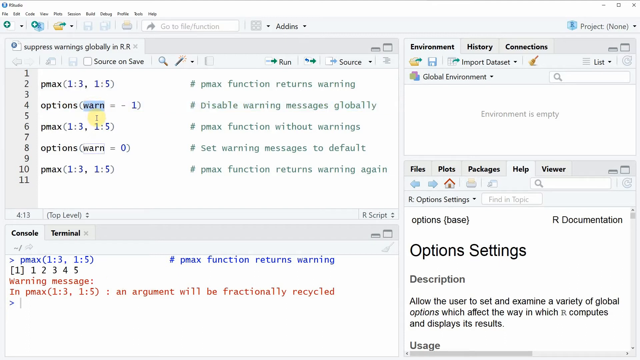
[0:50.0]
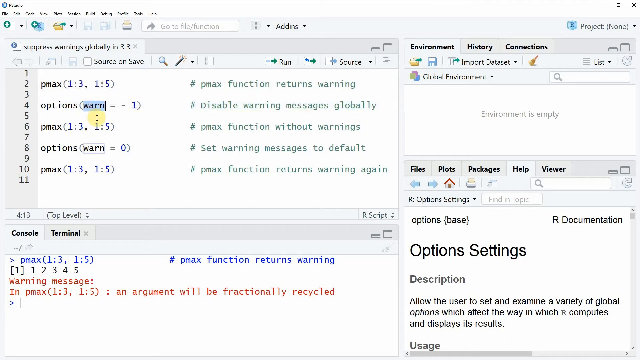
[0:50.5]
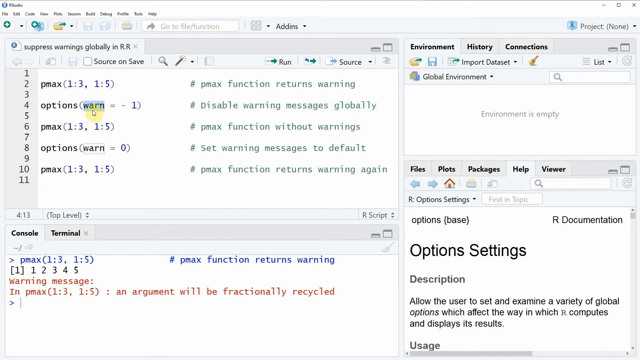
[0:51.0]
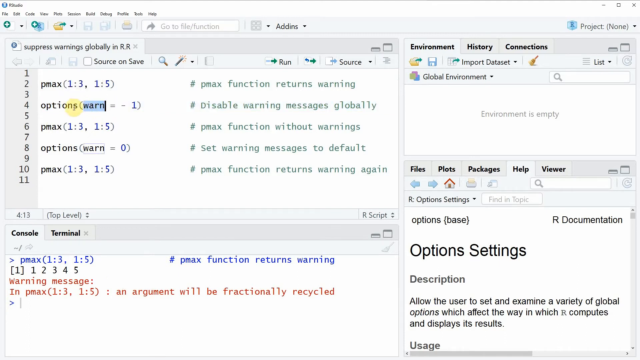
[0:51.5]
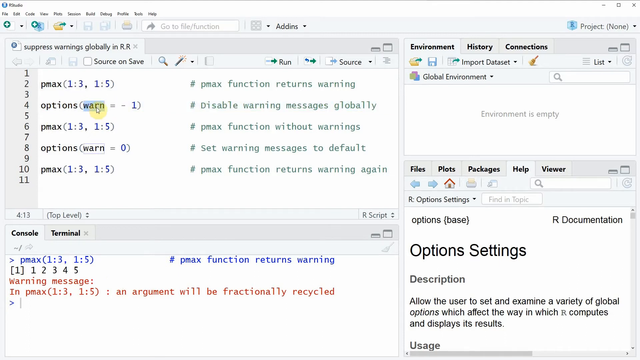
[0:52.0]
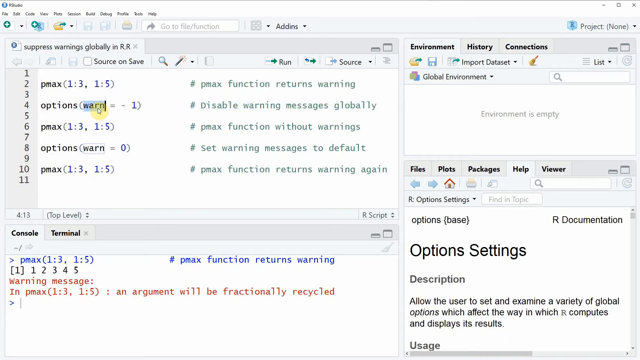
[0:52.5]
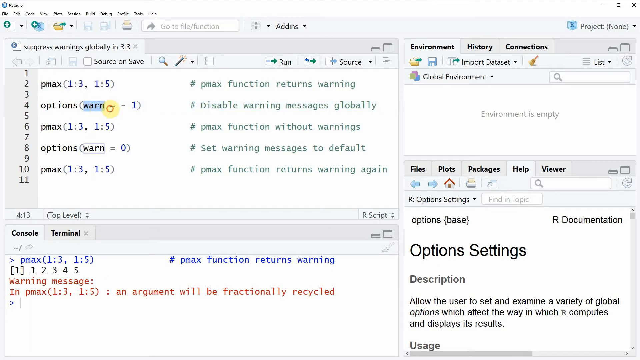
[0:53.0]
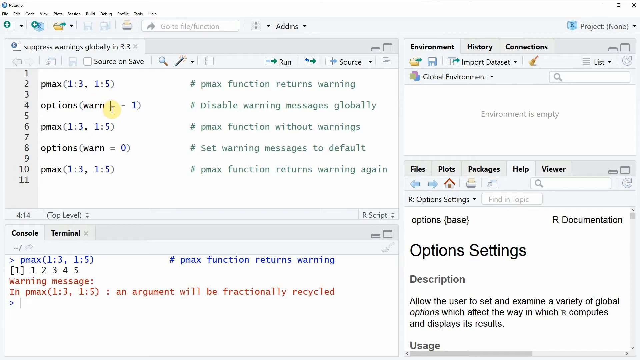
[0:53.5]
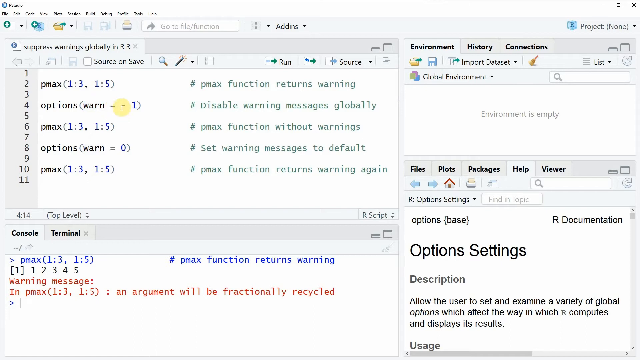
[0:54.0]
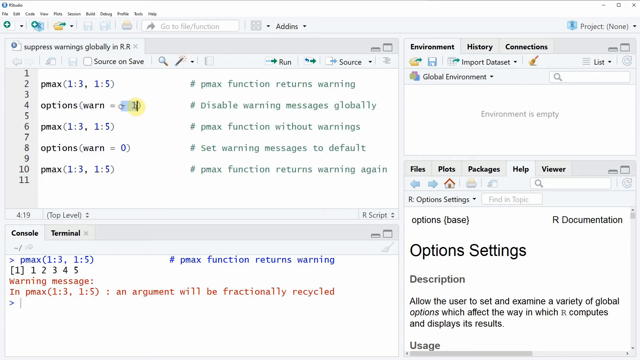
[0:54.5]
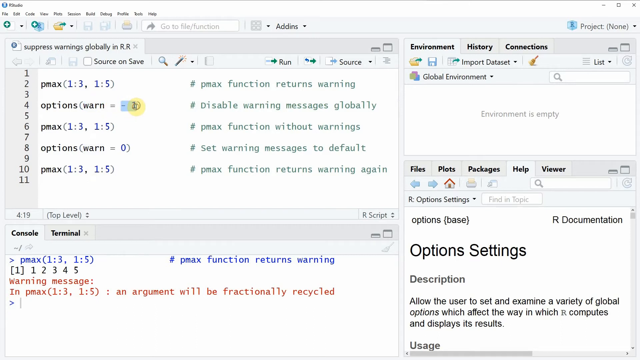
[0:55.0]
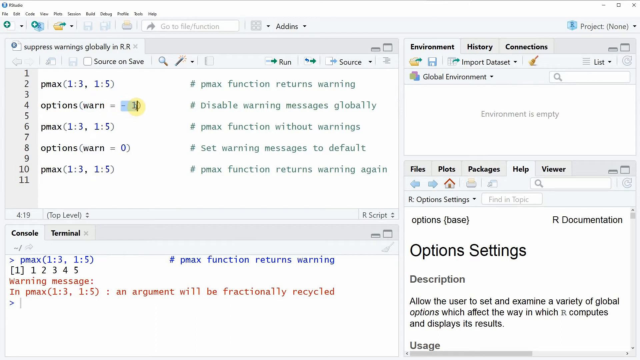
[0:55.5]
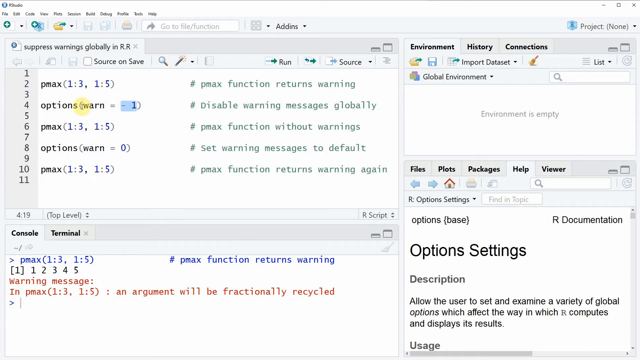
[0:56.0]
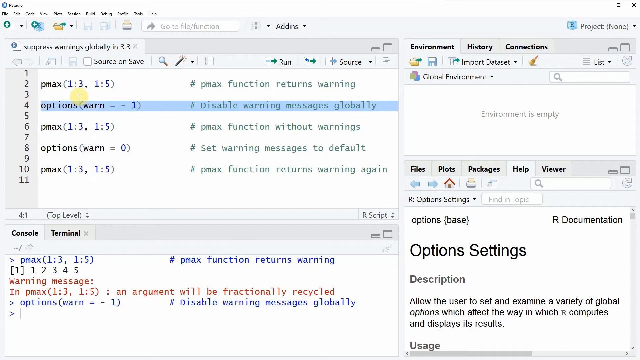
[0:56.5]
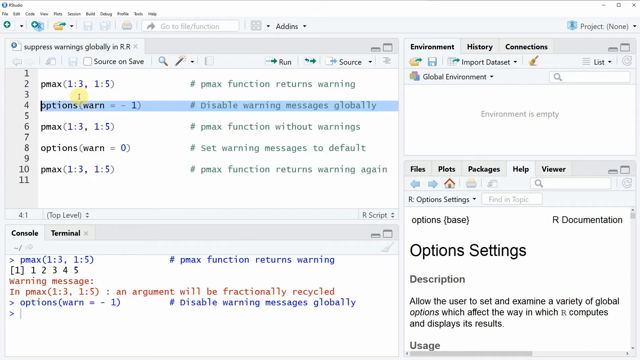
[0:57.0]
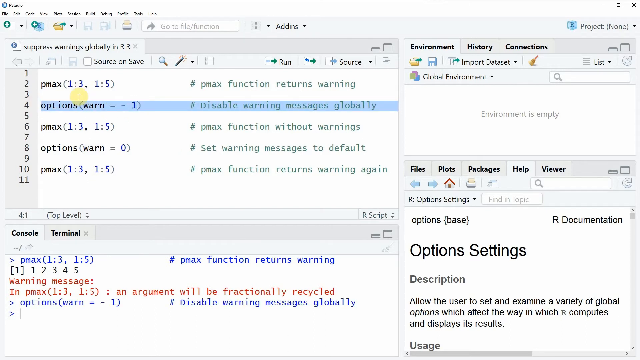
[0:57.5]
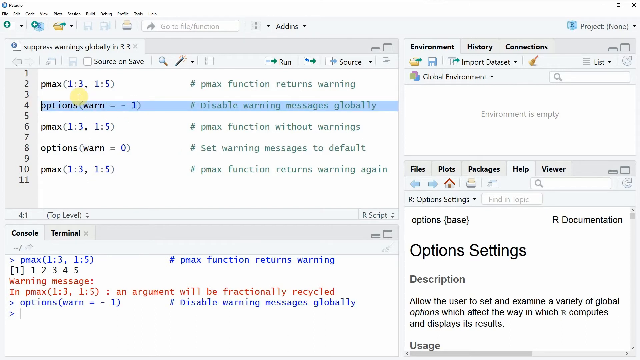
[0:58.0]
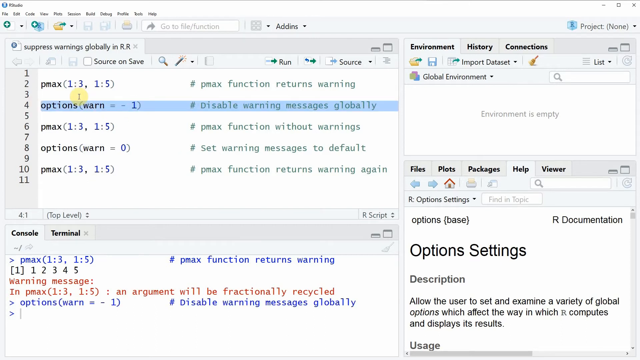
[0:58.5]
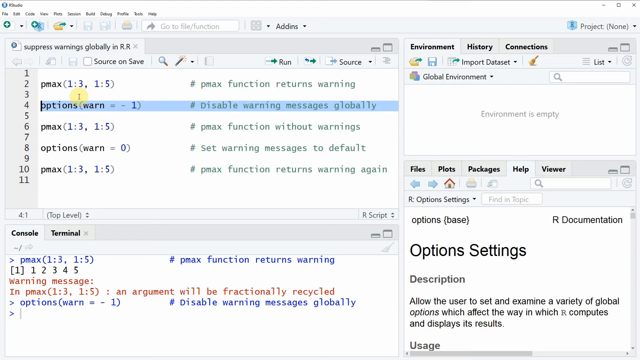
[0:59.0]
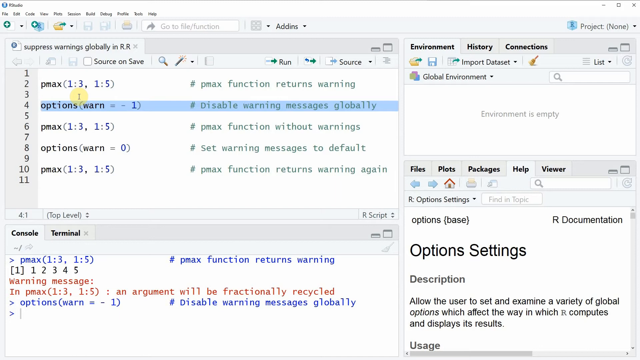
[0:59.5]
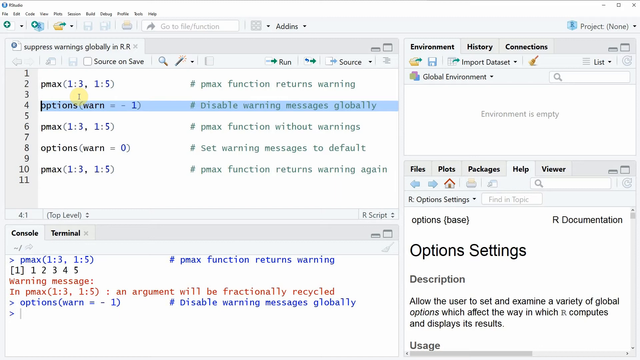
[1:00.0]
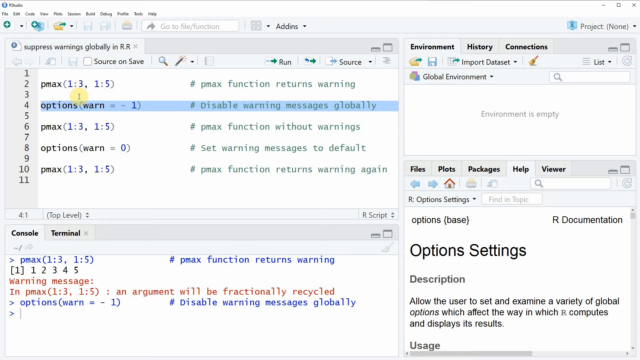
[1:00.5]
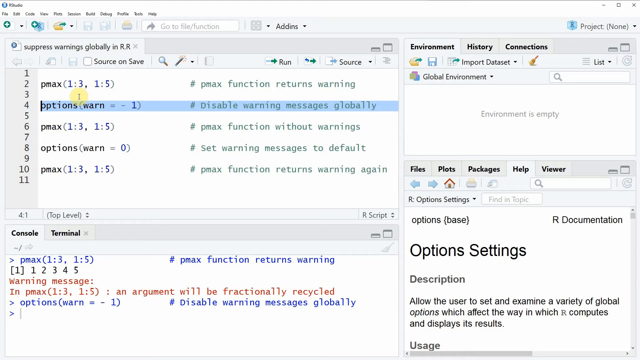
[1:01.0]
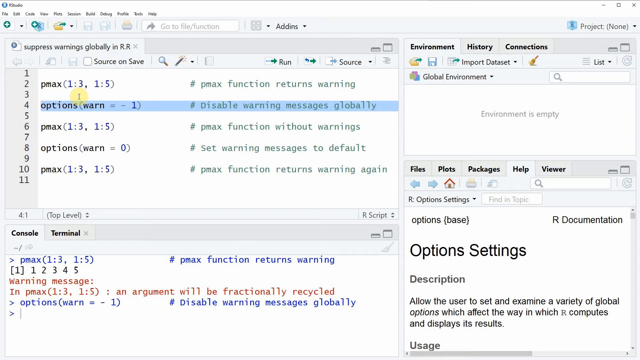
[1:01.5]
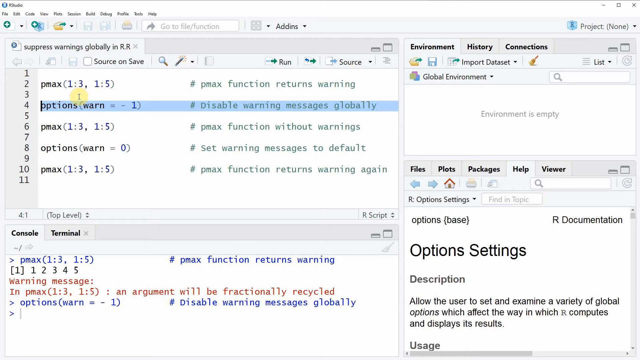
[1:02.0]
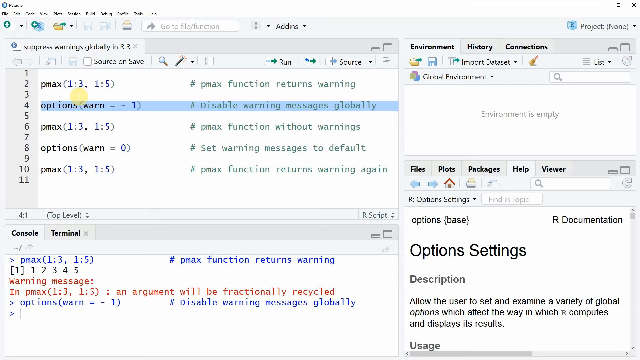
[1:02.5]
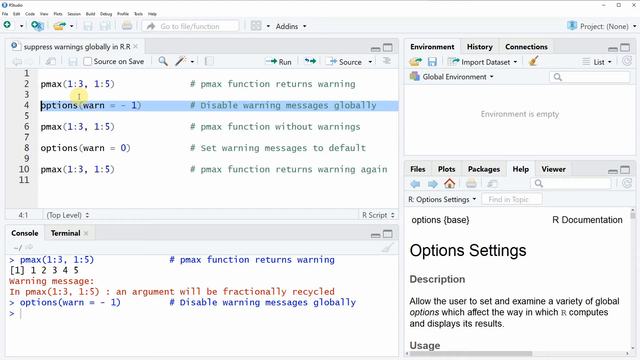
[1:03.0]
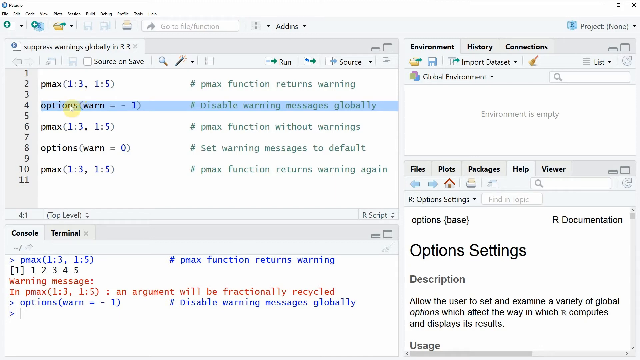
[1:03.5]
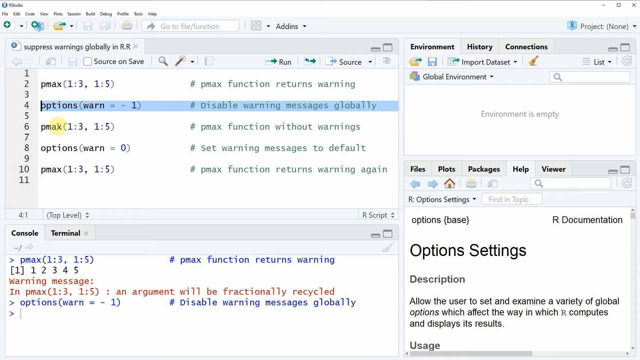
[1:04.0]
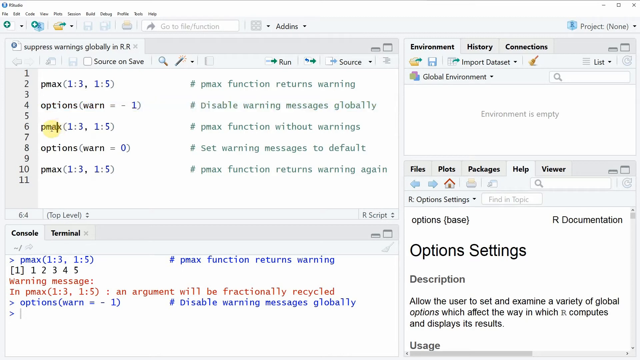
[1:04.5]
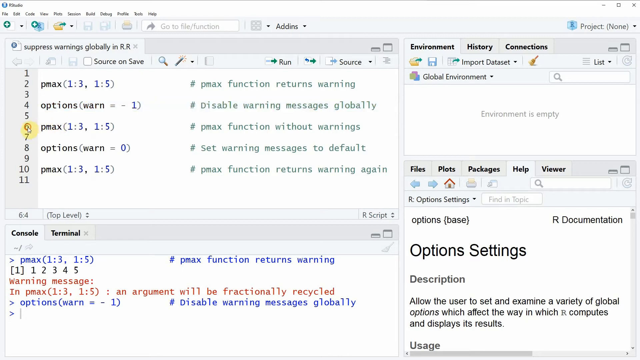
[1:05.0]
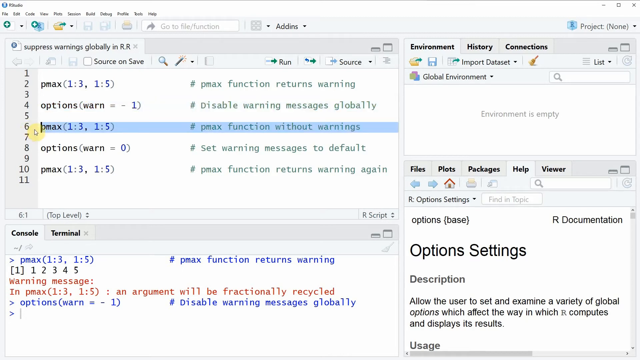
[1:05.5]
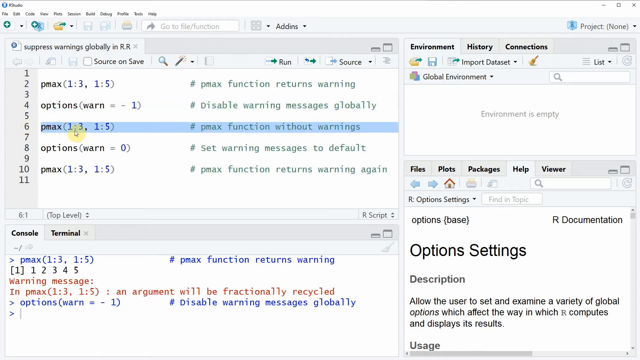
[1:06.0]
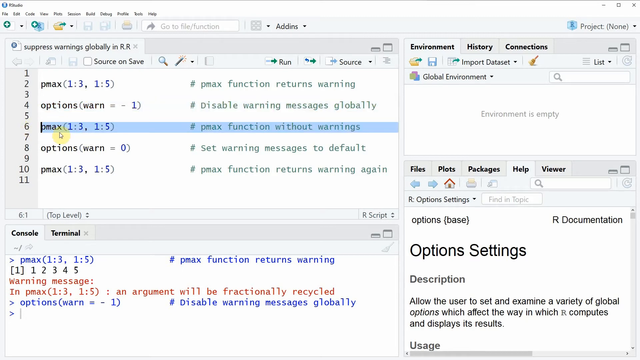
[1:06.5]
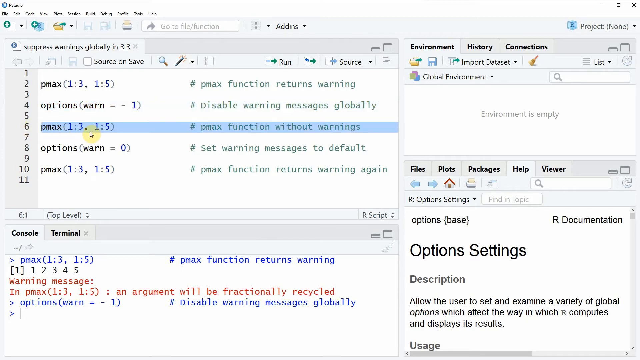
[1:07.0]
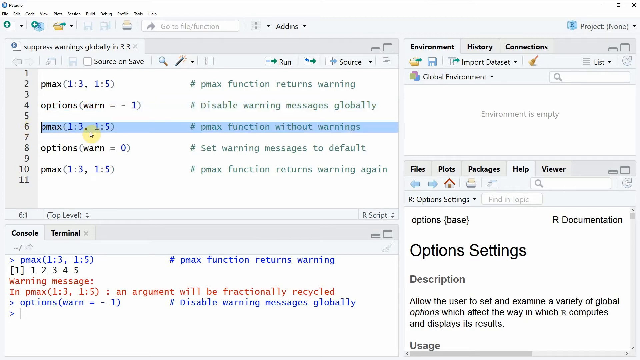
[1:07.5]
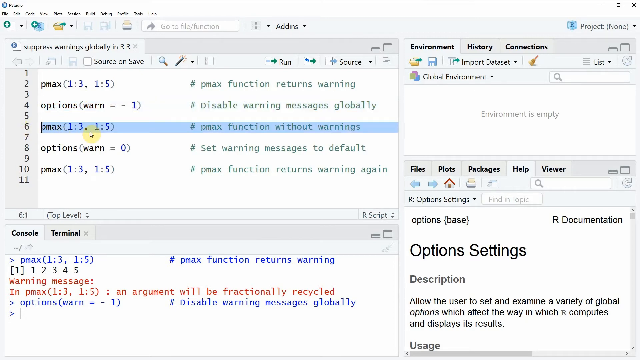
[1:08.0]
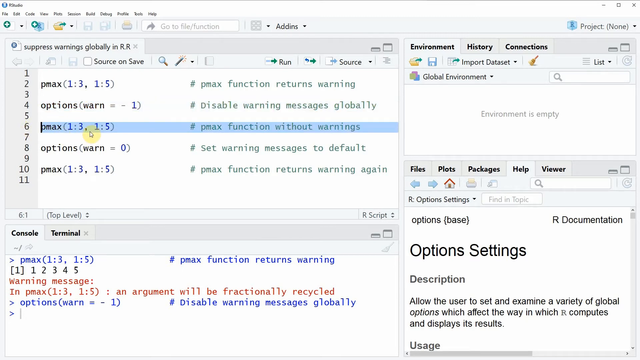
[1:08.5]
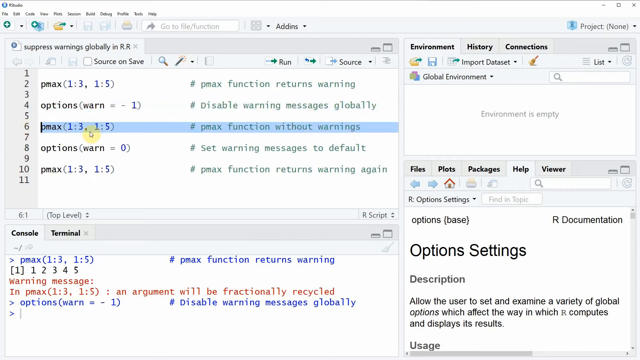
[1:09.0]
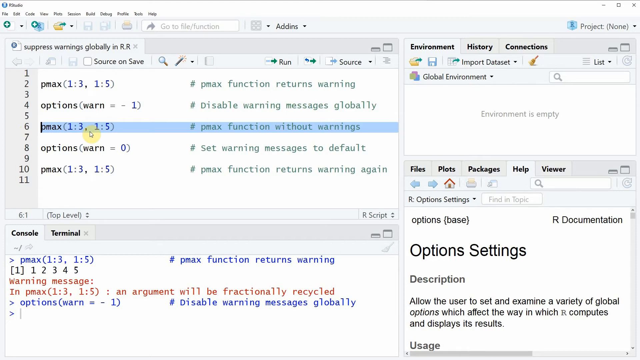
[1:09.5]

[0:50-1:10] The same coding page is shown as it scrolls. It shows the options input with warn equal to negative one and the comment "disabled warning messages globally"; the options section is selected and run. Further down is the same pmax as above, pmax(1:3, 1:5), with the comment "# pmax function without warnings". The output displays pmax(1,3, 1,5) and "argument will functionally be replaced", and the output of the options line with warn equal to minus one is shown as well.